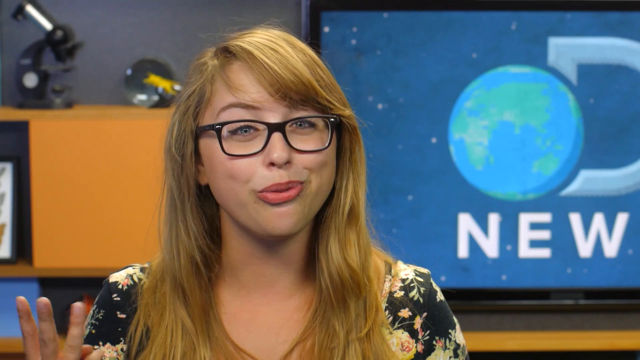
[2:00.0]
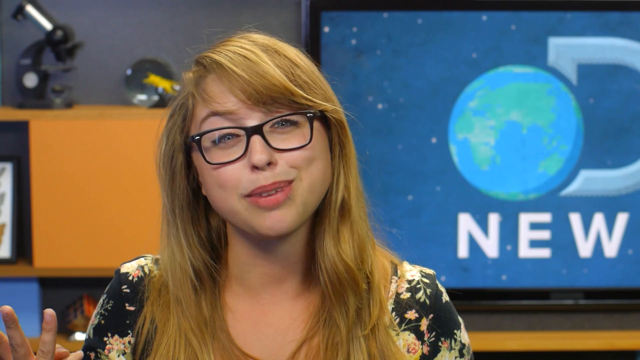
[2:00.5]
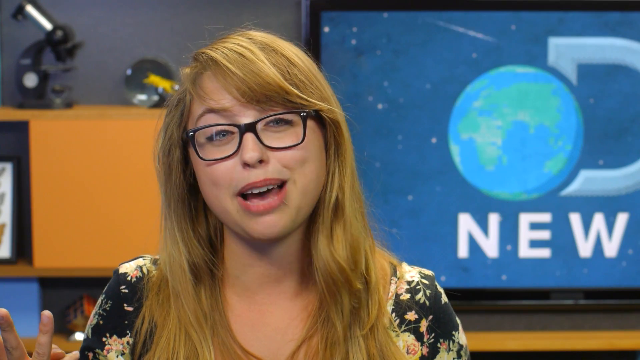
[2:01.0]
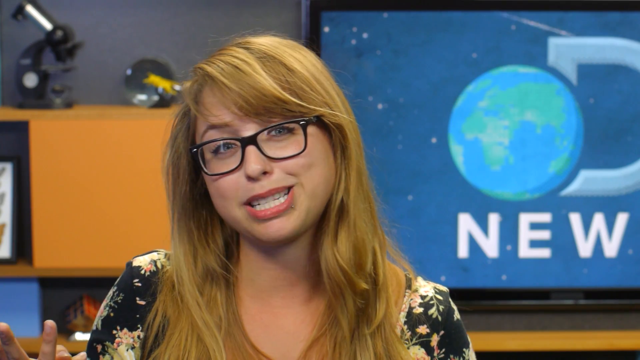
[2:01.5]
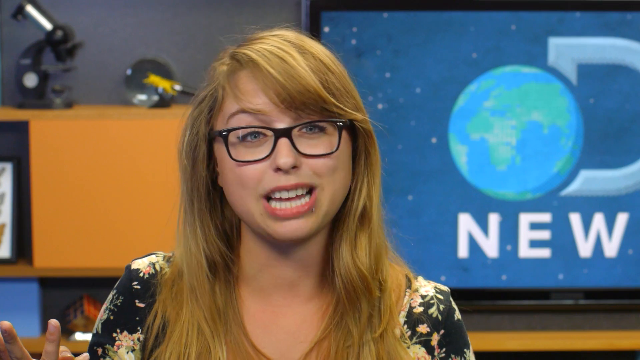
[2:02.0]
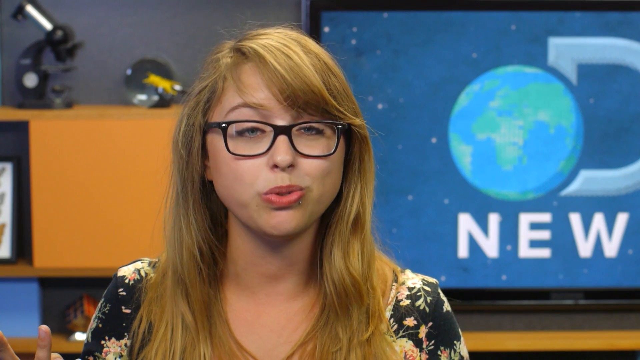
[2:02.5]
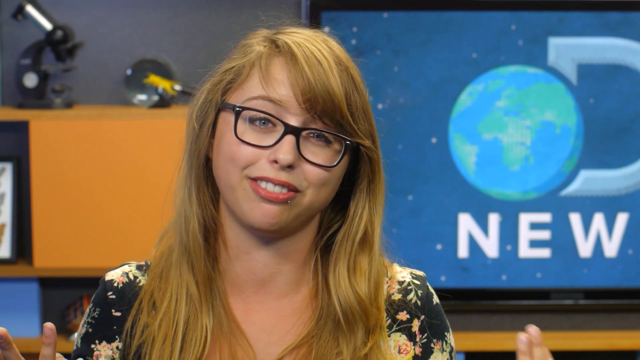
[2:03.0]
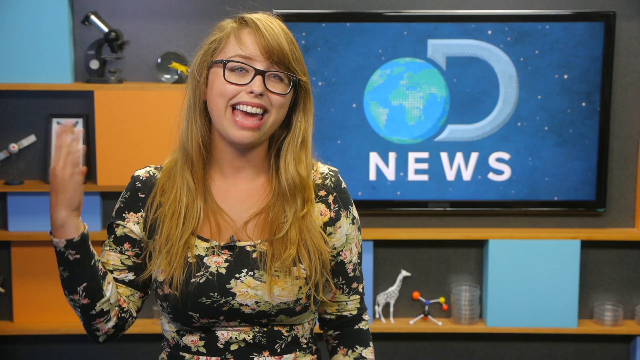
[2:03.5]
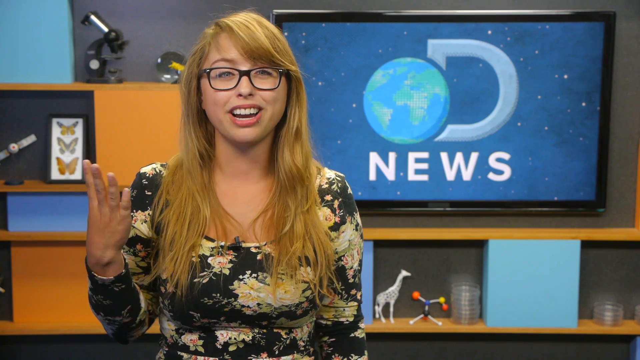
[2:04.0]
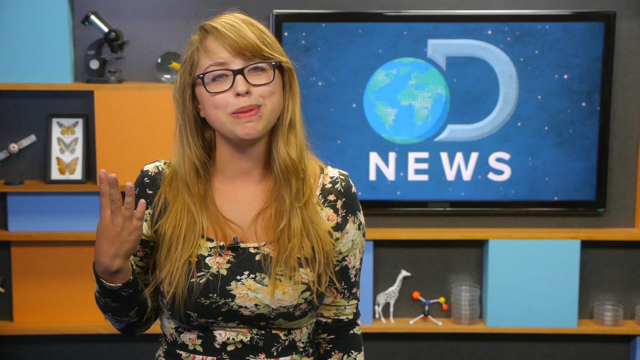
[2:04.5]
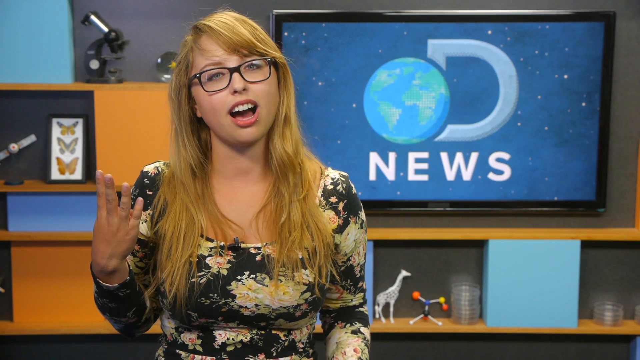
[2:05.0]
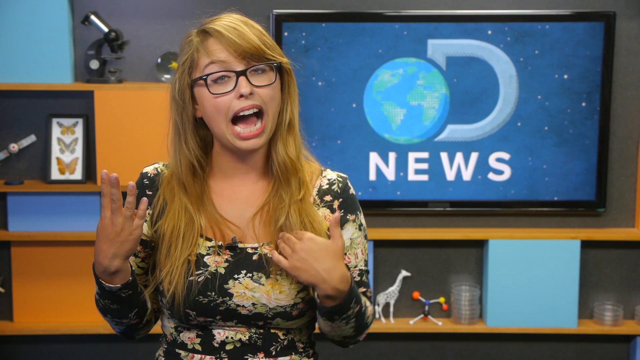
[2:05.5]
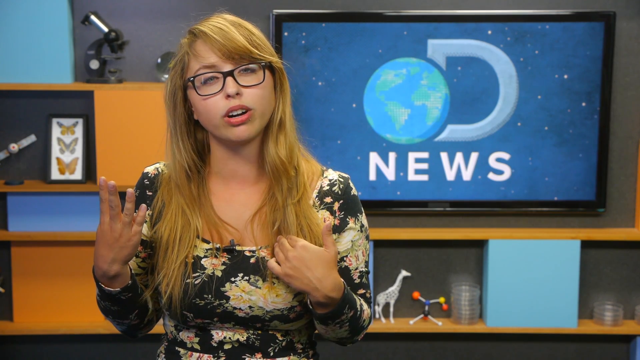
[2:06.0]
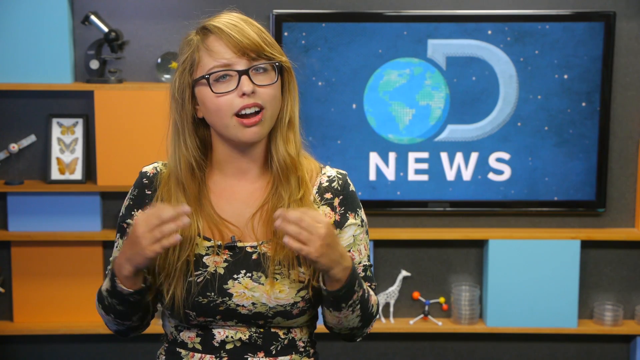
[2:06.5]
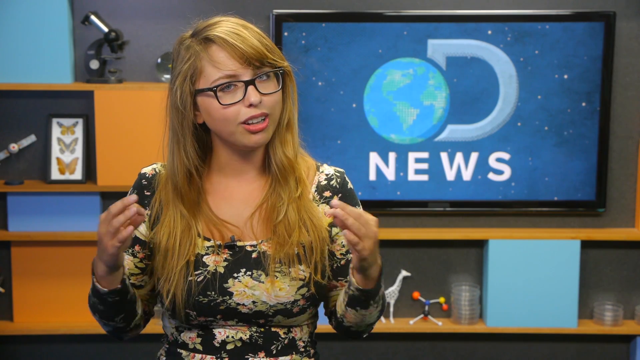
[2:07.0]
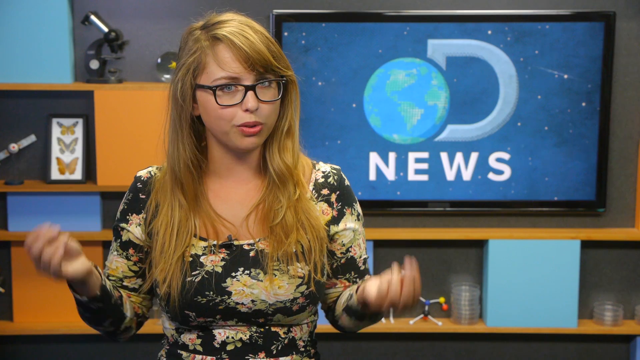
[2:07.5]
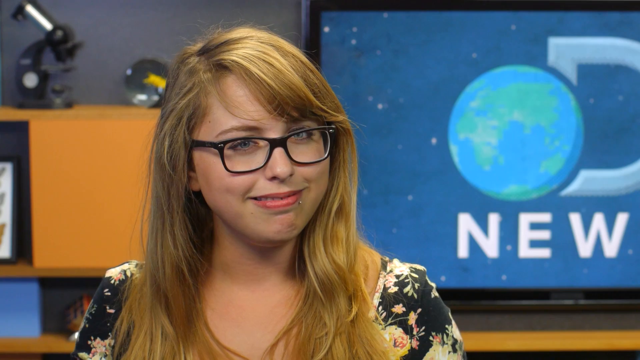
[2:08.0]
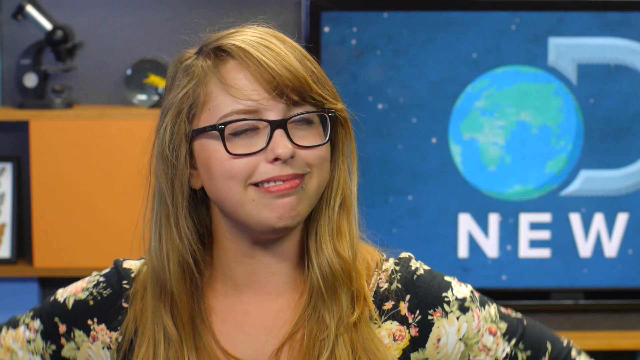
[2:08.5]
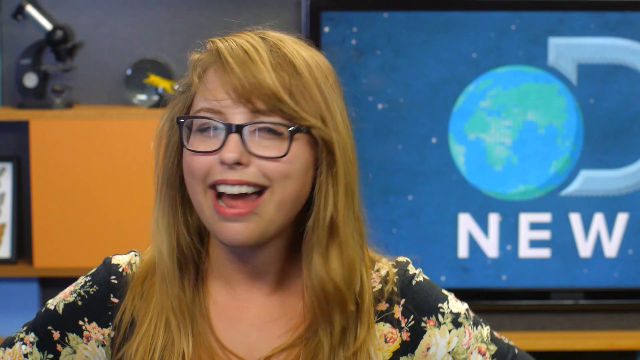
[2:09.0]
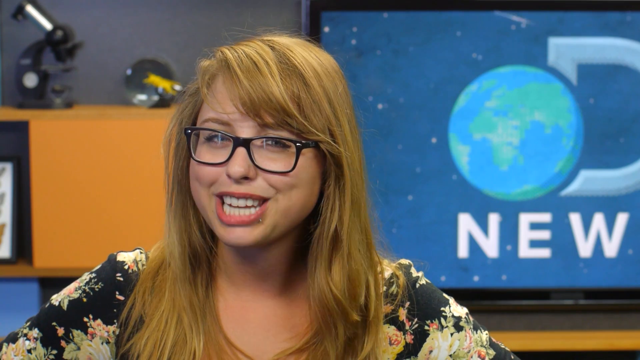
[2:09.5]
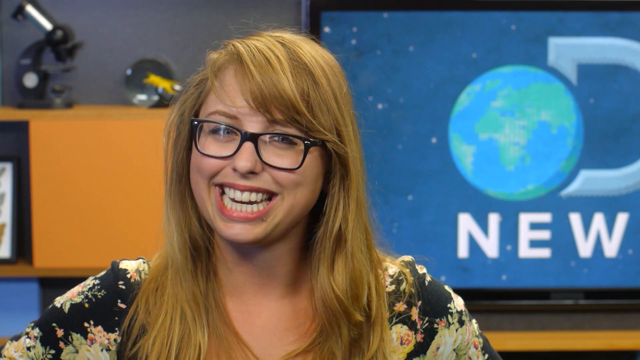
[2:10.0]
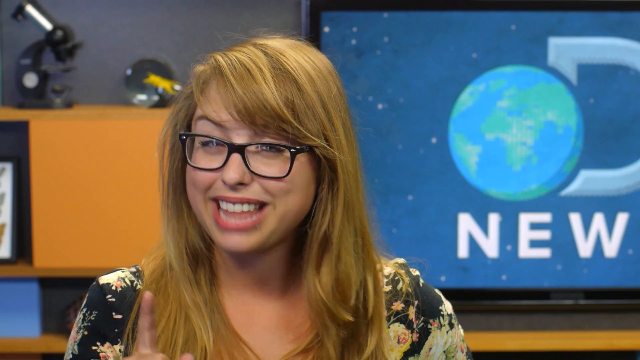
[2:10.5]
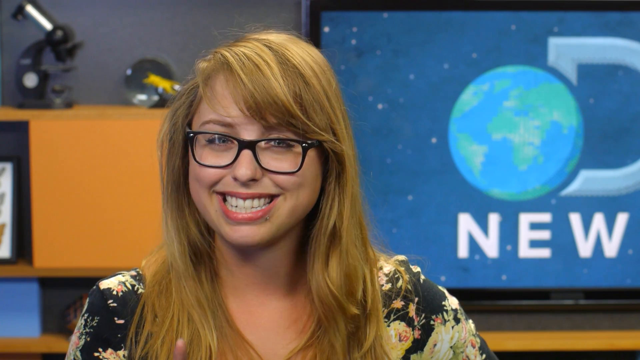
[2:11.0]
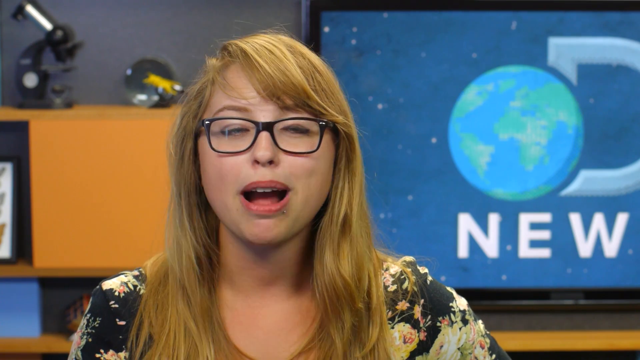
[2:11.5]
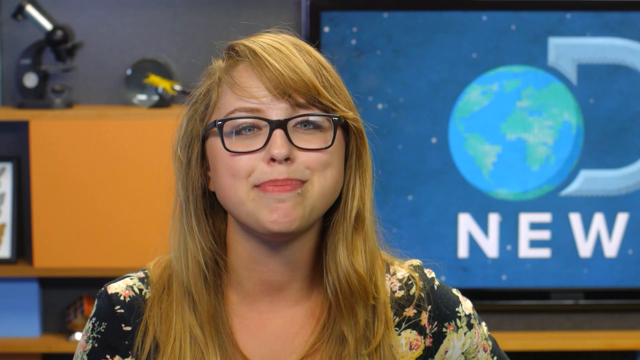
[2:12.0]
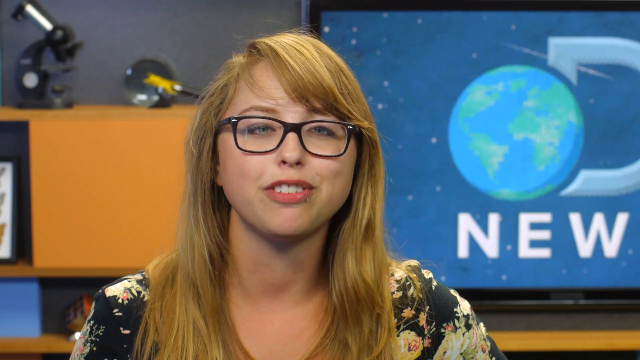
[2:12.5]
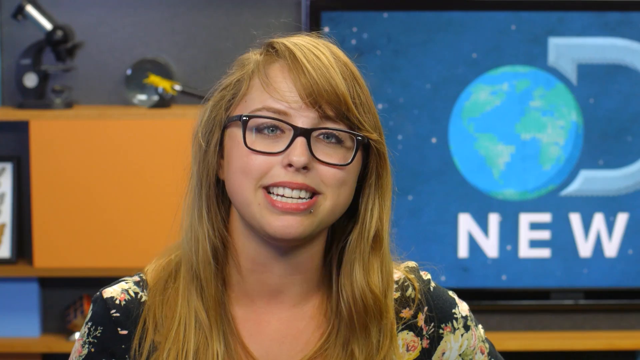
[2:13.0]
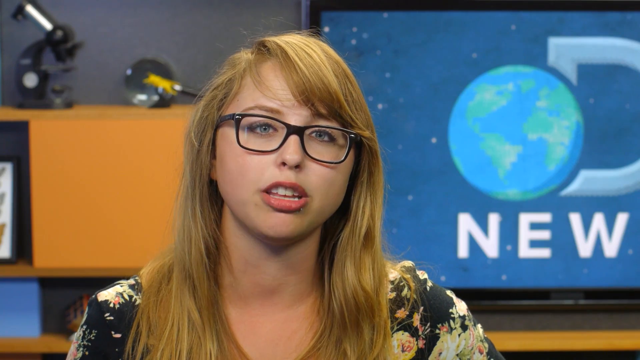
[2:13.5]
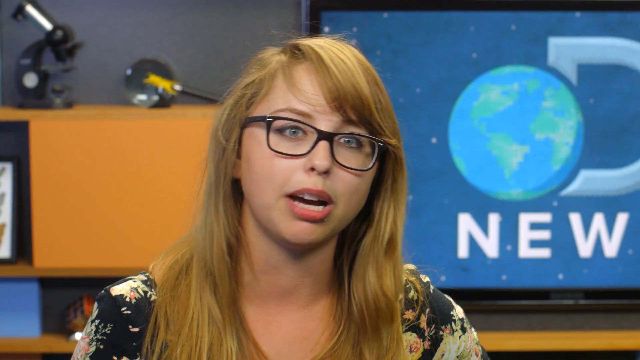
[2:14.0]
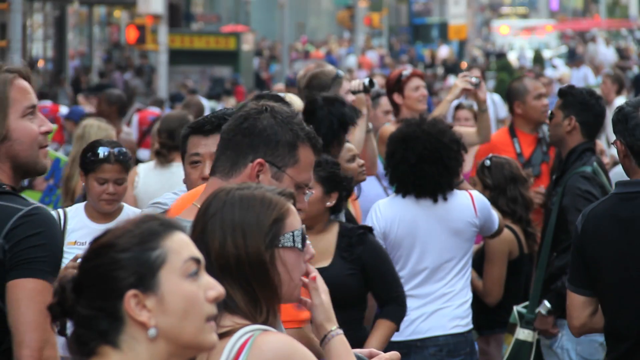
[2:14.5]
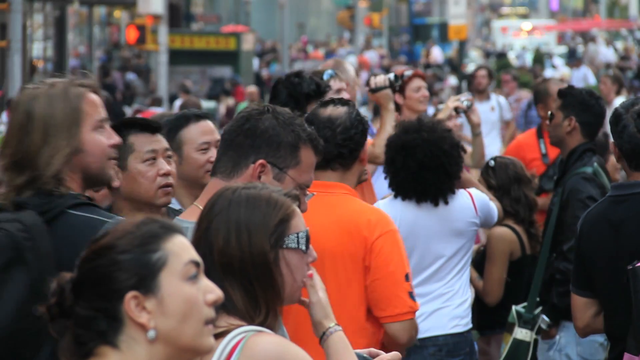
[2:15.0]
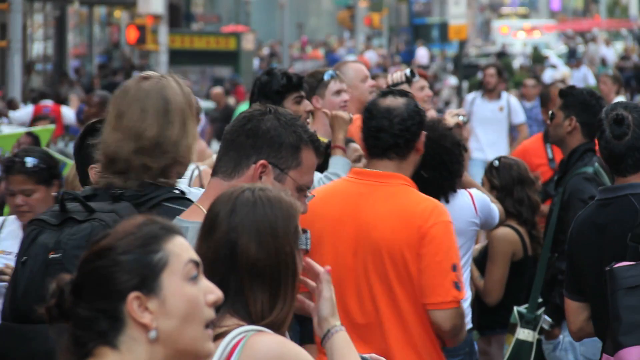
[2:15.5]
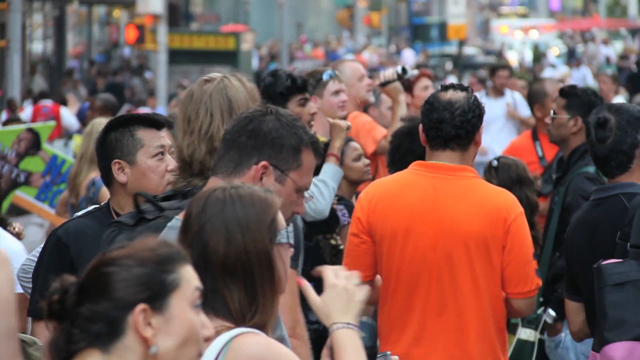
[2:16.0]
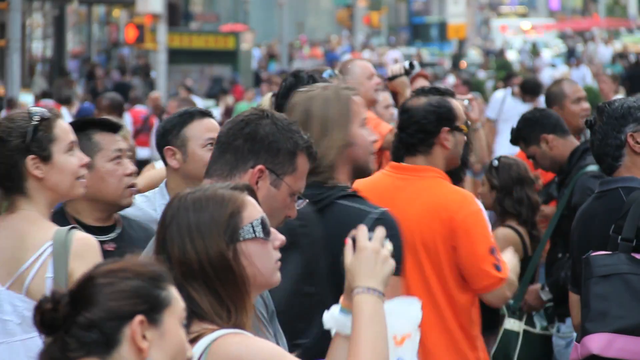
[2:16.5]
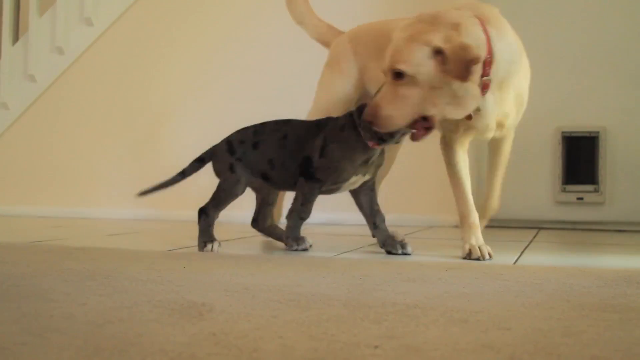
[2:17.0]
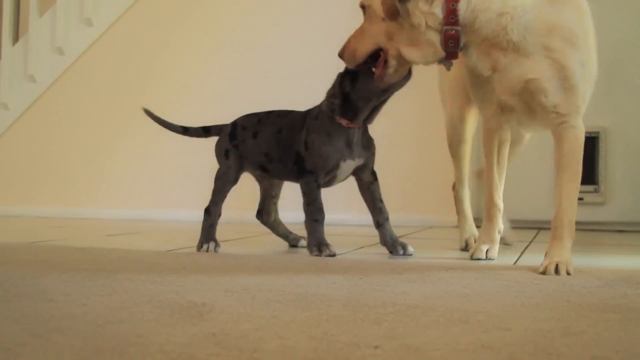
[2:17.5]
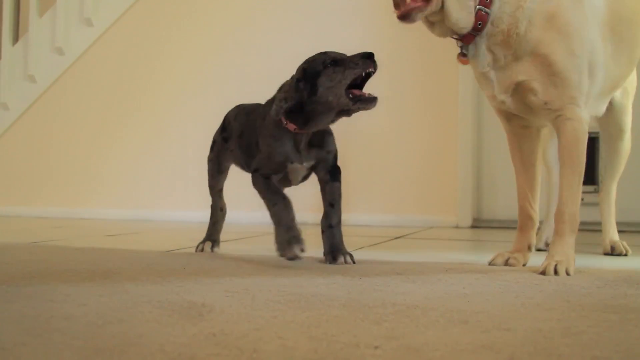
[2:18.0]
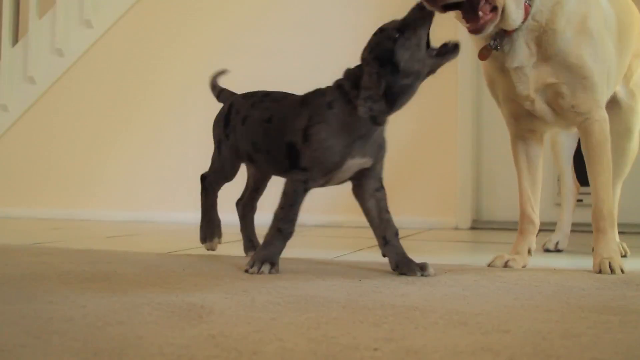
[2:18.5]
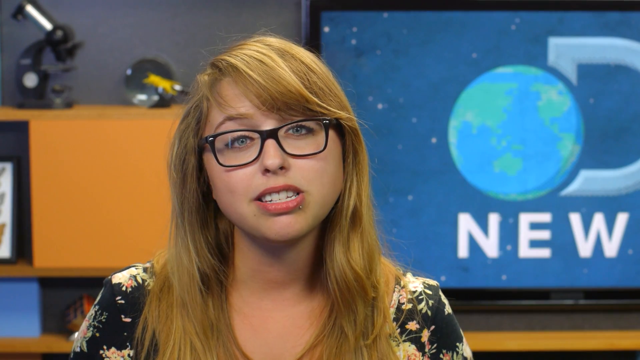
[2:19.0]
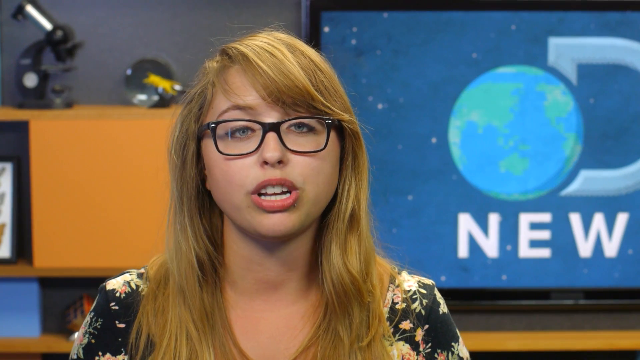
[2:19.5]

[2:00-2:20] Laci is in the studio, less animated now, as she continues to speak. Then the video goes out to a very busy urban street in daylight, packed shoulder to shoulder with people. Most of them have cameras or camcorders, and almost everyone is looking up in the same direction at something that appears to be very interesting. Everyone has sleeveless shirts; there are women and men of all ethnicities, tall and short. Next is an indoor segment with two dogs playing: a small one that is still a pup, around a year old, and a larger tan-colored dog, of unidentified breeds. Back in the studio, there is a close-up of Laci's face, and then the camera pulls back to show the rest of the studio. She continues to gesture, a little less animated than before, seemingly as if wrapping up the news.